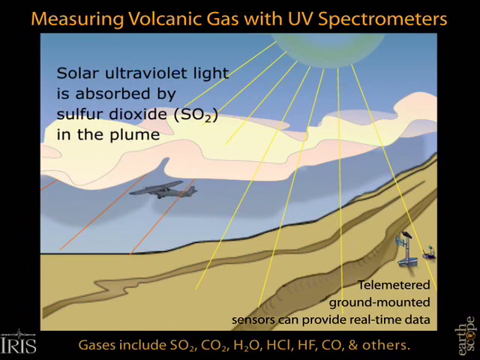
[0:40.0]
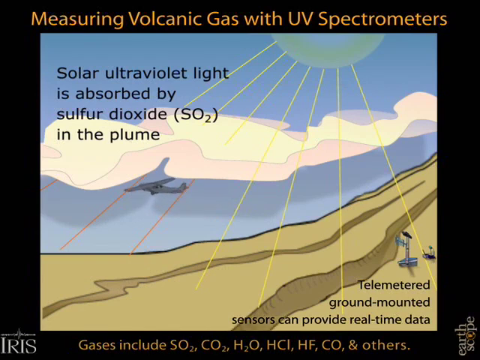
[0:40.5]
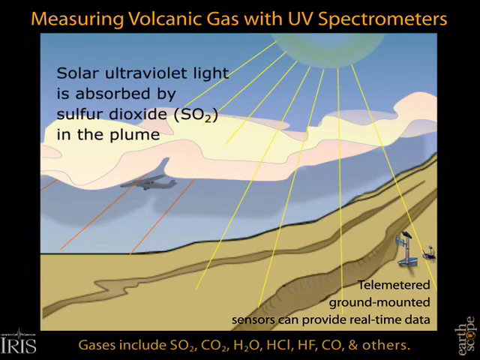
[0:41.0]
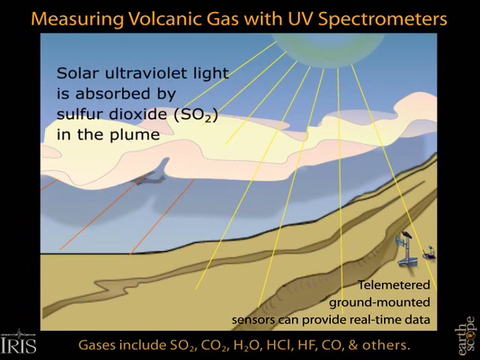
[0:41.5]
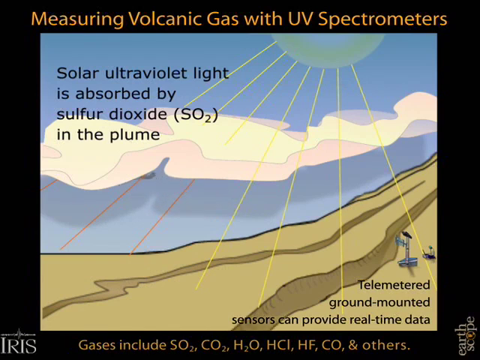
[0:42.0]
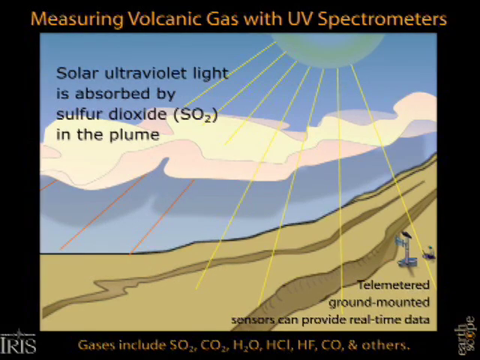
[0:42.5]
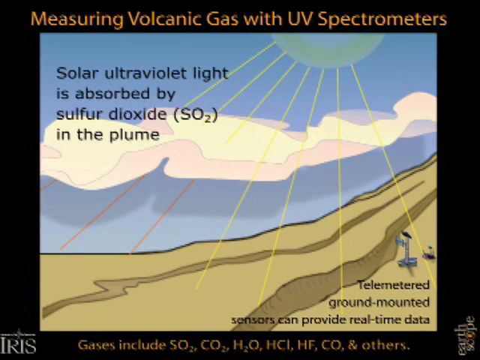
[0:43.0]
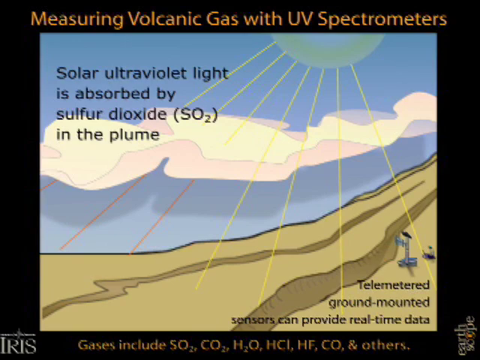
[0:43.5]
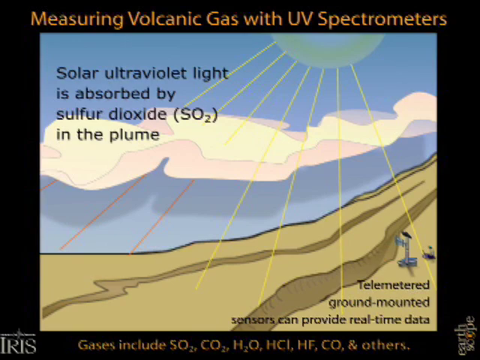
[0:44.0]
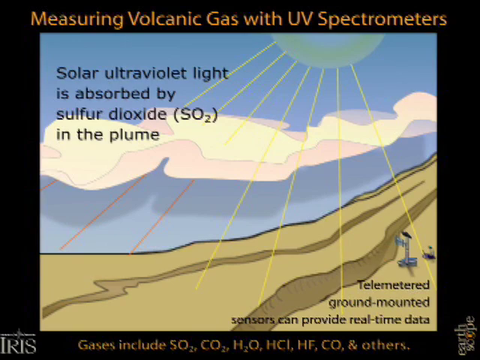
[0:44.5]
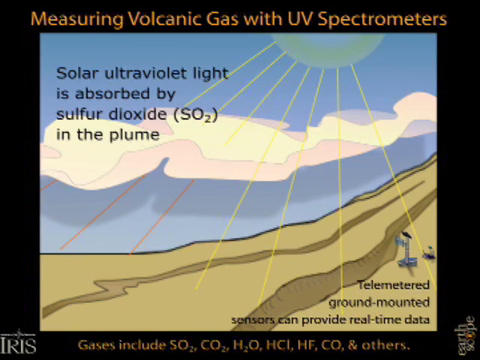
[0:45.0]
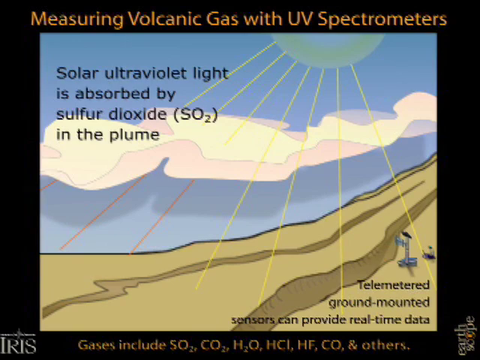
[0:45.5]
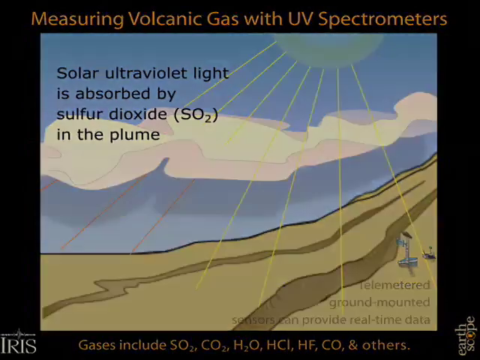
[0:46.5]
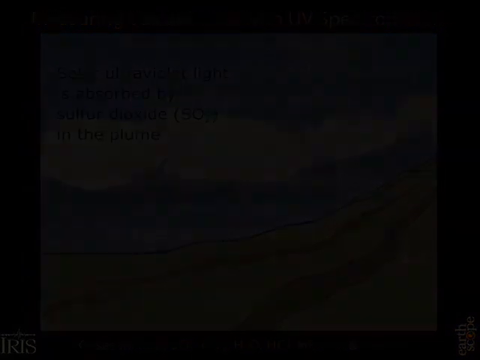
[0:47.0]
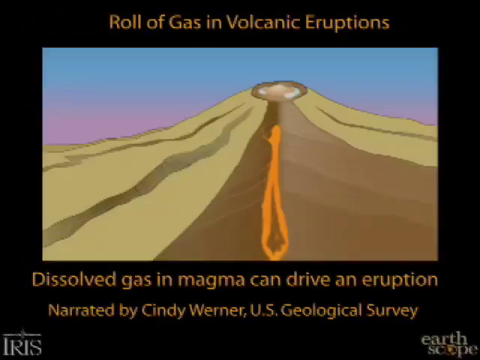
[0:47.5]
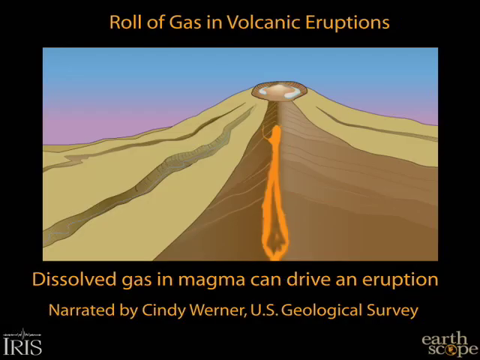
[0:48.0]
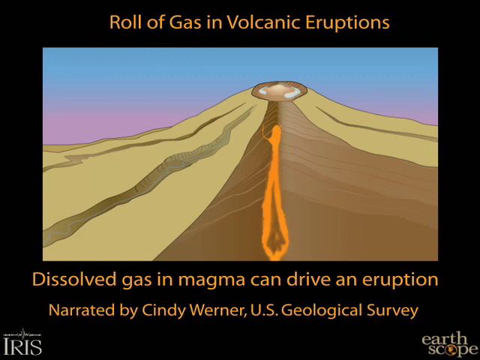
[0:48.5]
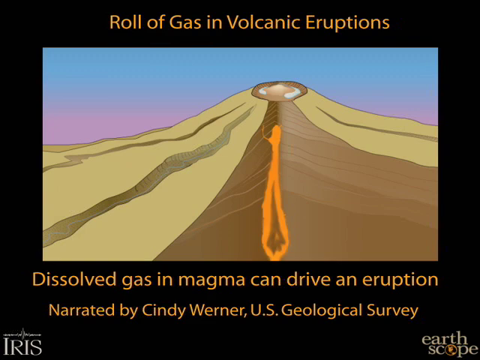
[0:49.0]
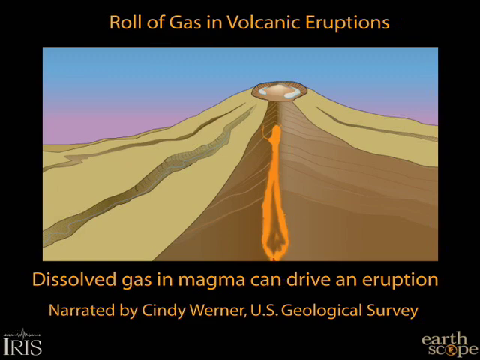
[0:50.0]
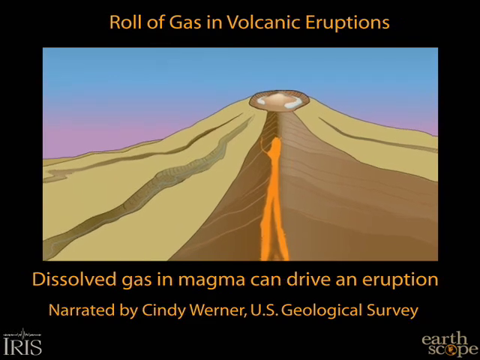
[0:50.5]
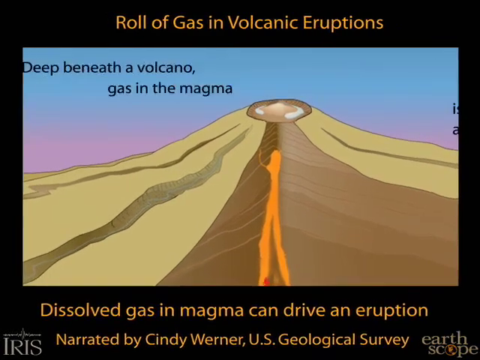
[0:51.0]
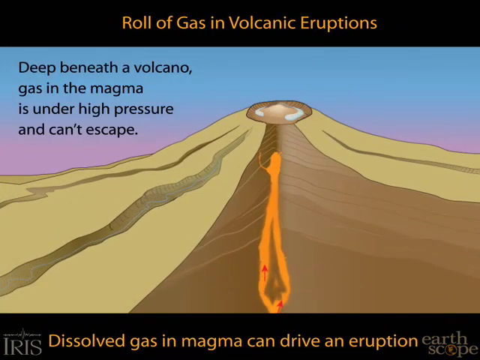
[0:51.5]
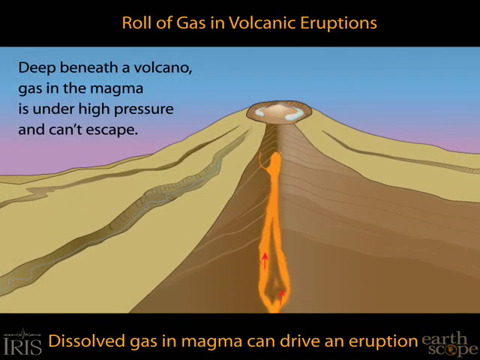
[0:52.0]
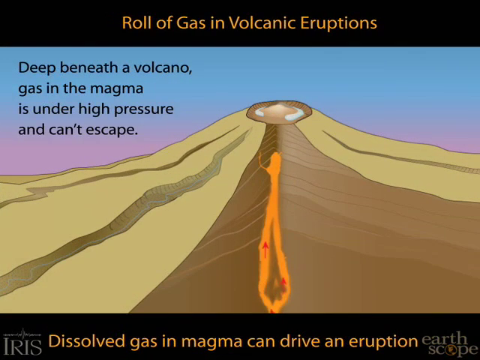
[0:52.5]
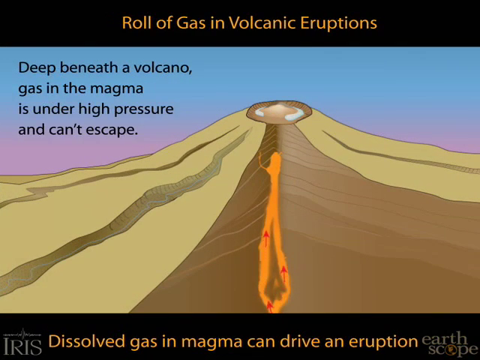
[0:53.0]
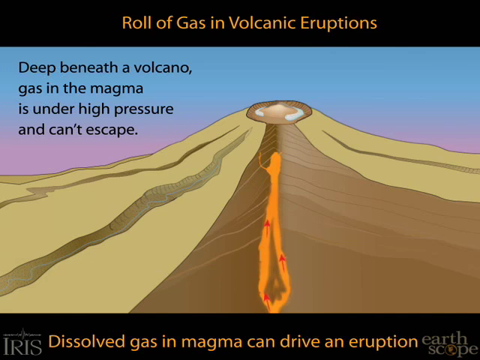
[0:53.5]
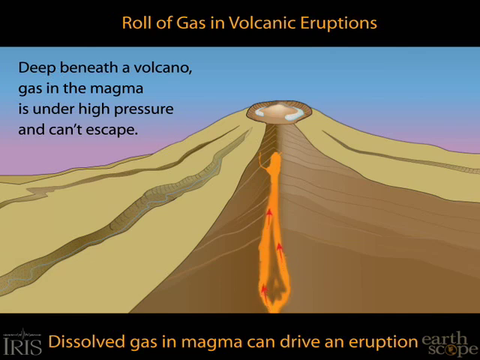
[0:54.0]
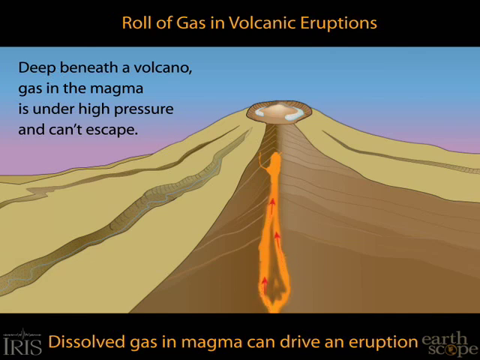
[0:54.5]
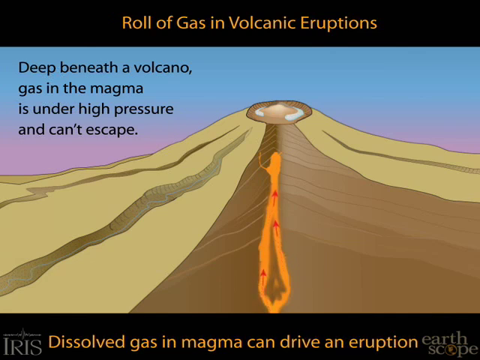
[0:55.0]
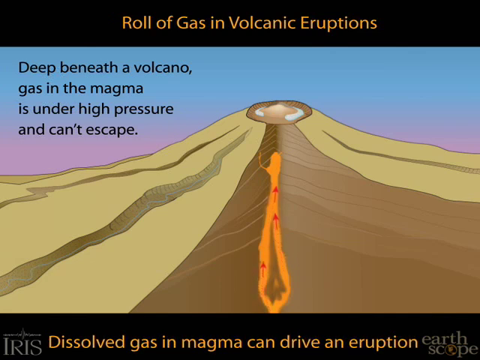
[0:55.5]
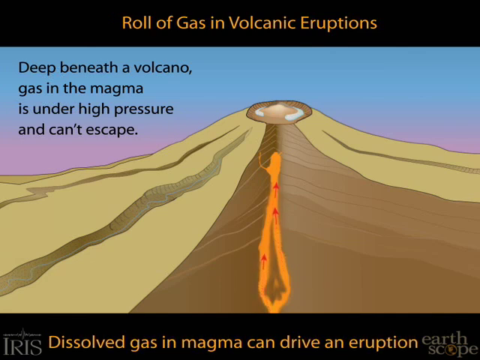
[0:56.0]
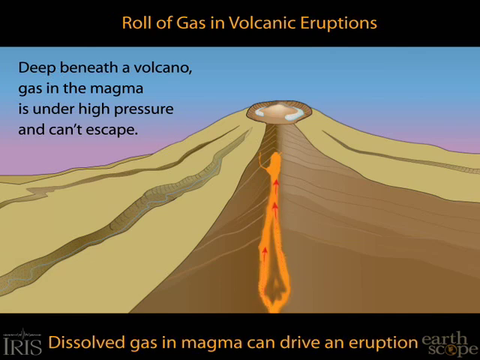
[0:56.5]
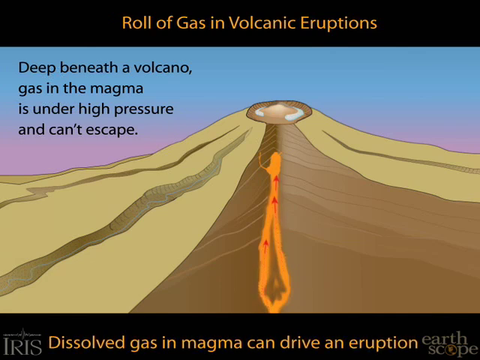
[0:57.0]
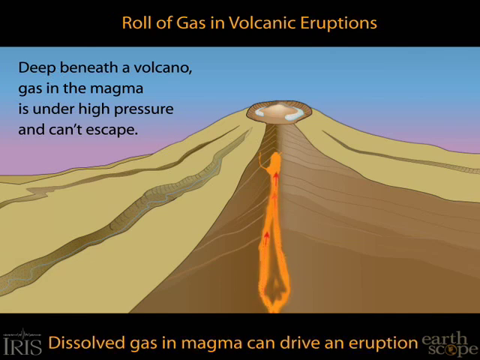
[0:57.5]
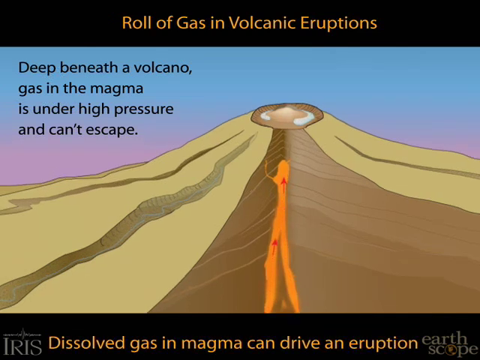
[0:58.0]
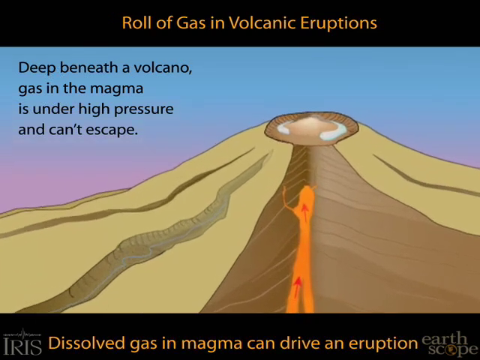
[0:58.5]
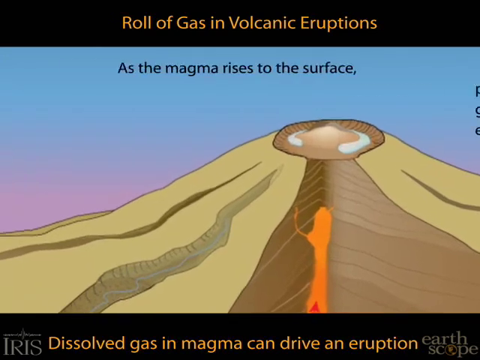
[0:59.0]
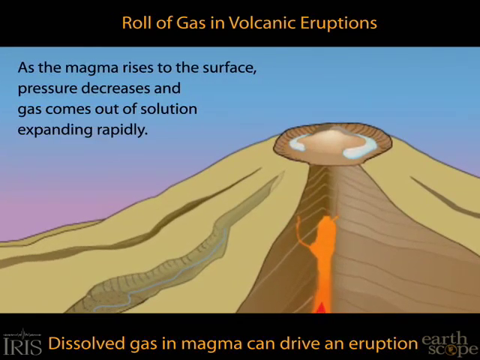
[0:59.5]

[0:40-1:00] The animated view shows the left slope of a volcano, with a bright yellow-gold sun shining down and its individual rays highlighted. A large single cloud is in the middle of the picture against a clear blue sky, and a plane flies underneath this plume. A text description states "solar ultraviolet light is absorbed by sulfur dioxide, SO2, in the plume," and a label at the top reads "measuring volcanic gas with UV spectrometers." At the base of the volcano is an instrument mounted on the ground, labeled "telemetered ground mounted sensors can provide real time data." The airplane flies underneath the volcano's plume. A bright transition then reveals a different volcano that has not erupted yet. Beneath it, a sentence reads "Dissolved gas in magma can drive an eruption," followed by the name of the narrator, Cindy Werner, and a credit naming the U.S. Geological Survey as the source.